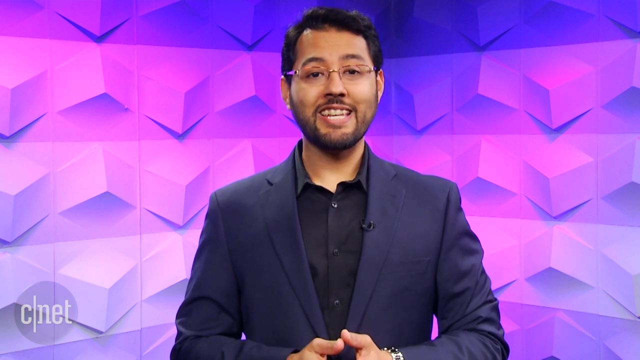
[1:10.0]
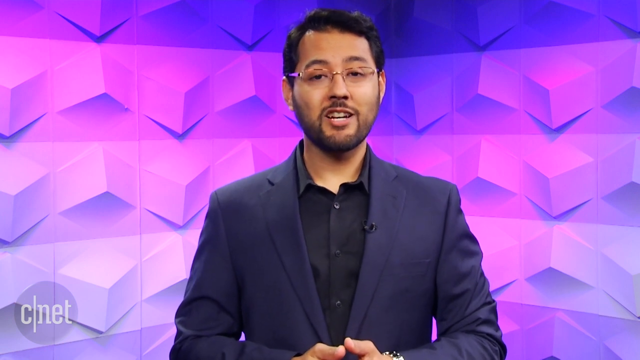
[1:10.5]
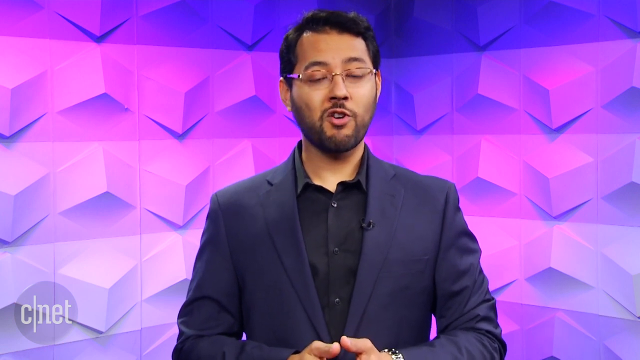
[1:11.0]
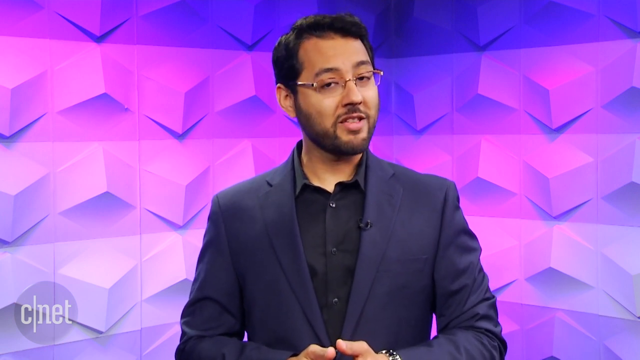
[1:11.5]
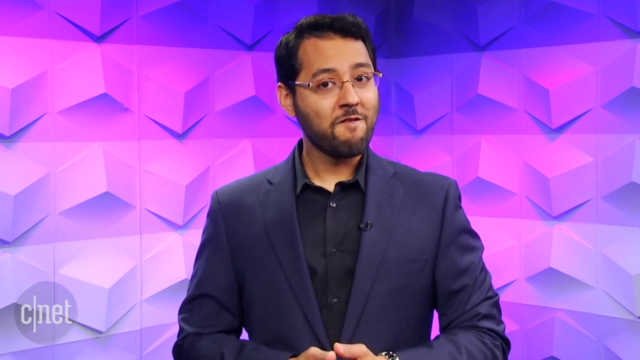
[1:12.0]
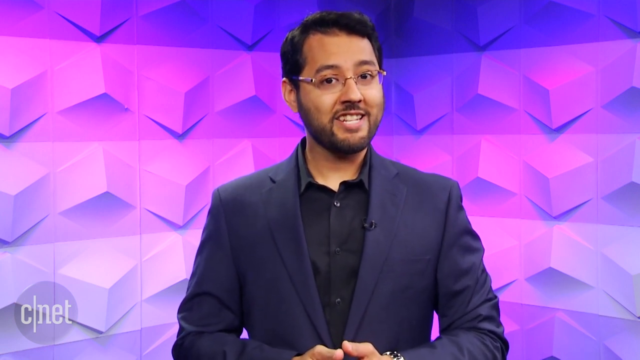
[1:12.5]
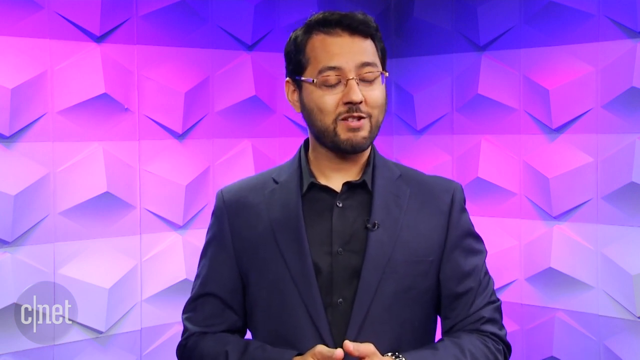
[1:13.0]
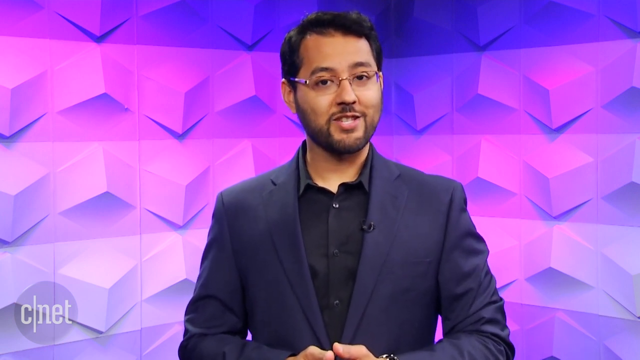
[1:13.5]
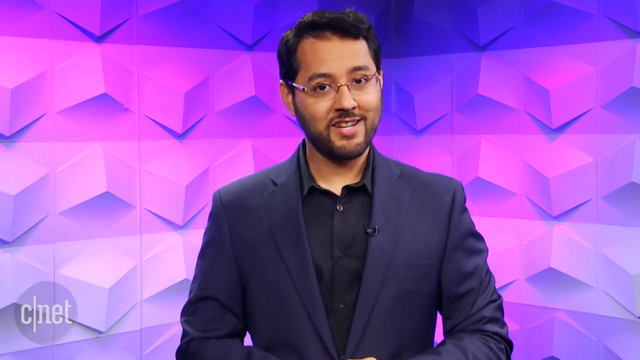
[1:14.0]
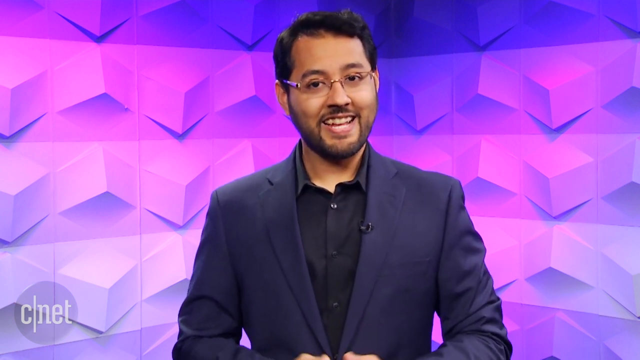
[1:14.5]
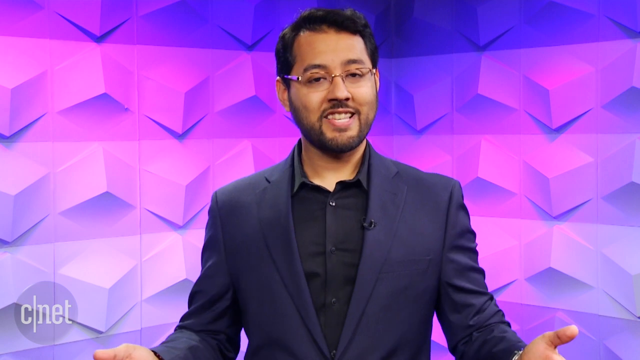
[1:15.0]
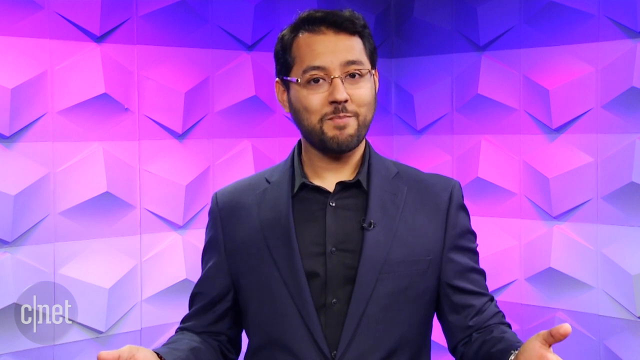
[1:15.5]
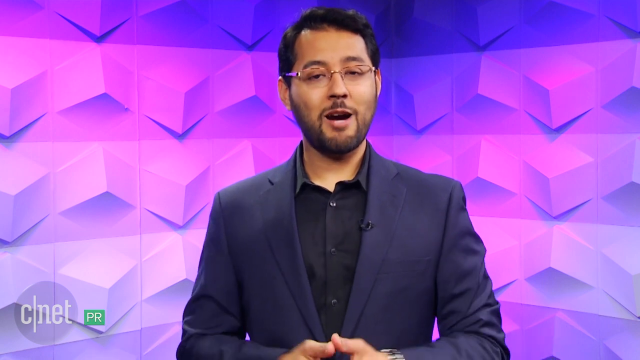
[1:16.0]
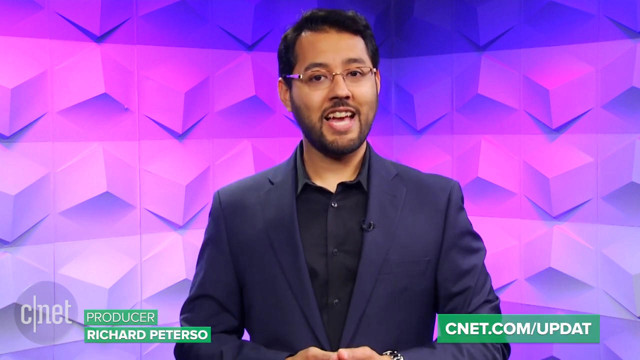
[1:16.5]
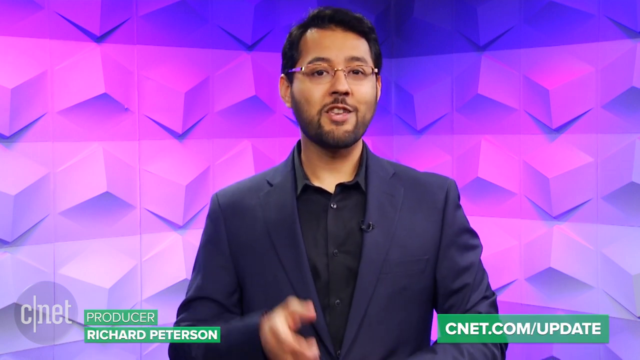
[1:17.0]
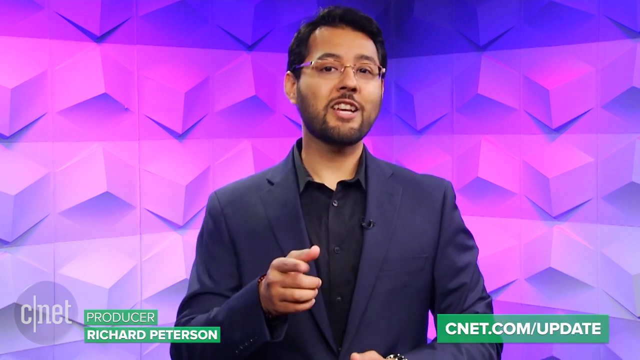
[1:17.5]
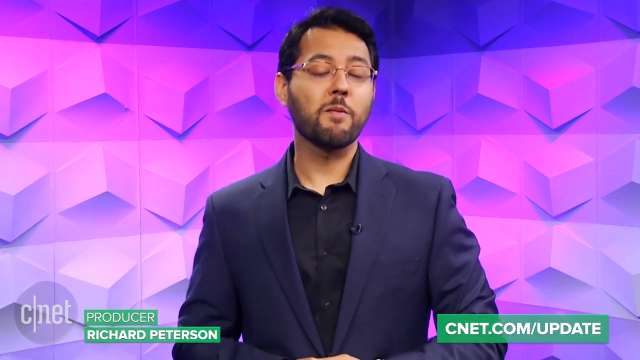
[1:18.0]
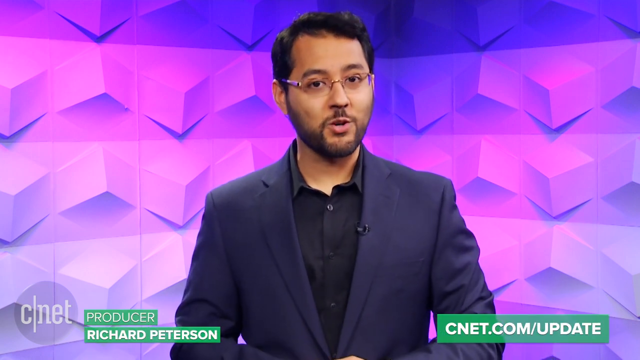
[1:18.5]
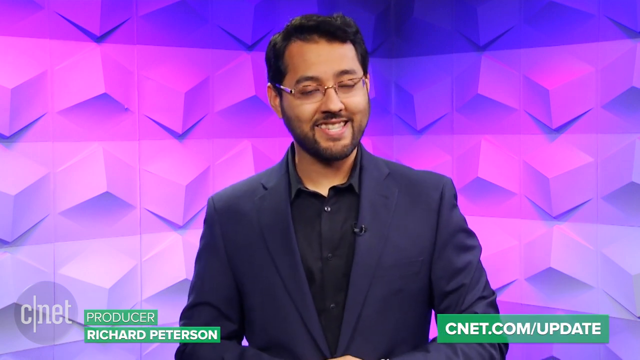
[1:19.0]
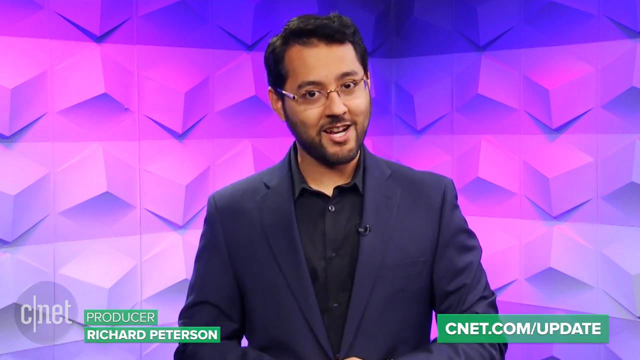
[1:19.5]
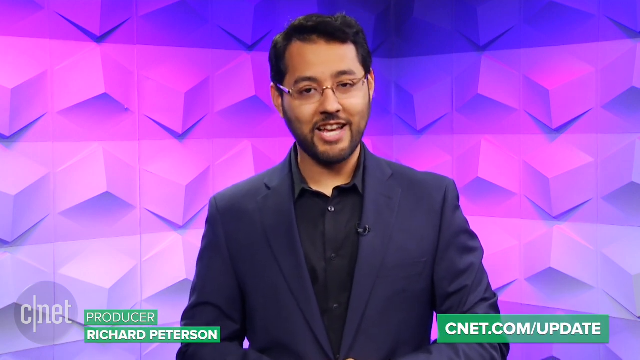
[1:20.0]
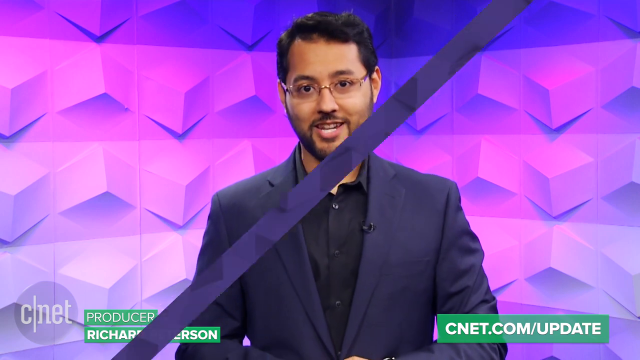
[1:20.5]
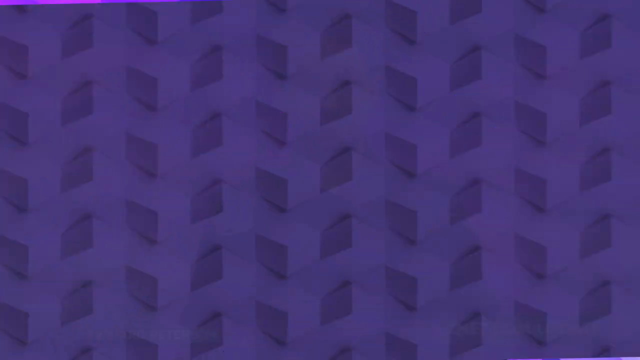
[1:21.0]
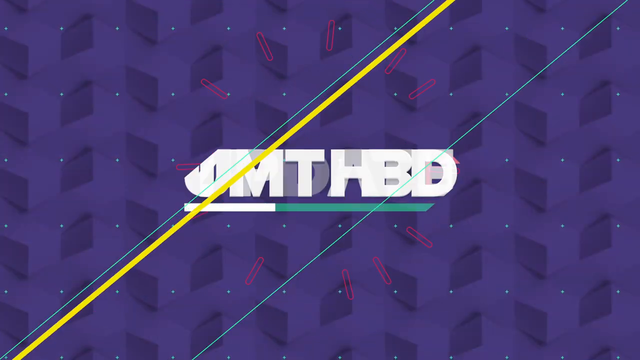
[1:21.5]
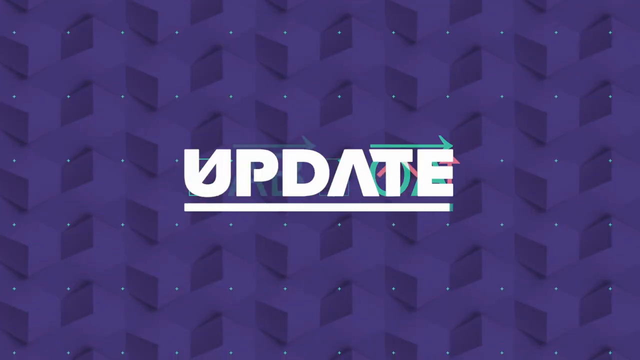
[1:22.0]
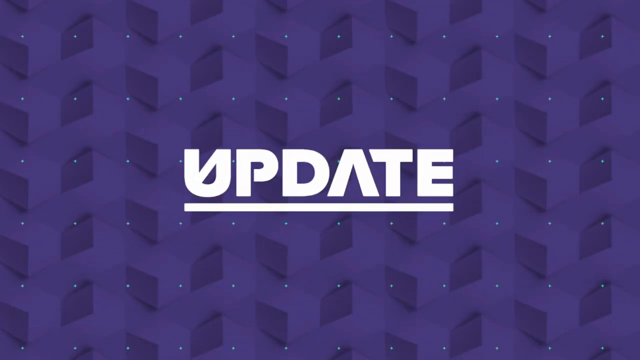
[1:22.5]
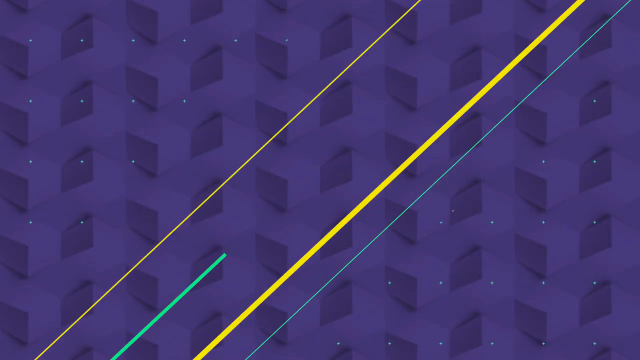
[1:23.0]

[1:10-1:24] The anchor, very excited, concludes. Text on the screen then shows that the producer is Richard Peterson and gives a website, cnet.com.update. The anchor is a man, probably in his forties, wearing glasses and a suit that is magenta or maybe dark blue looking magenta because of the lighting.